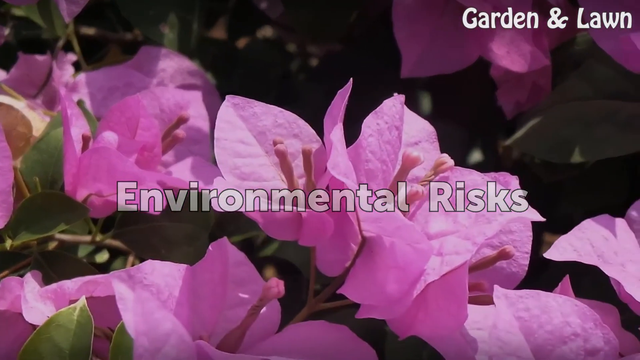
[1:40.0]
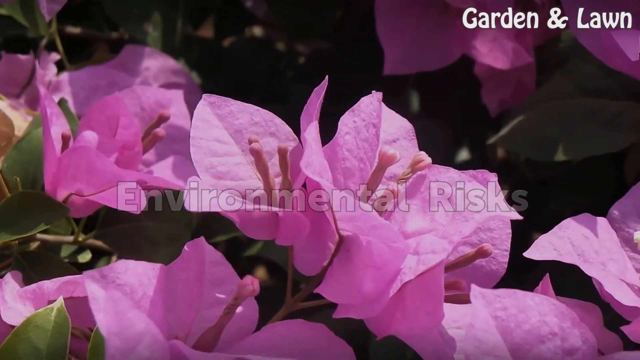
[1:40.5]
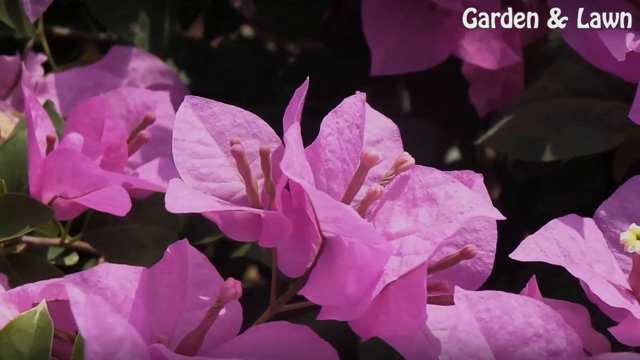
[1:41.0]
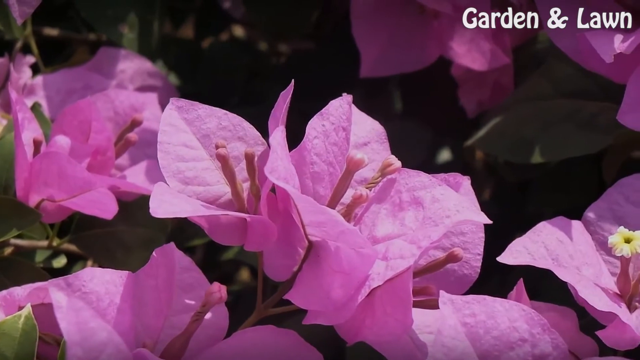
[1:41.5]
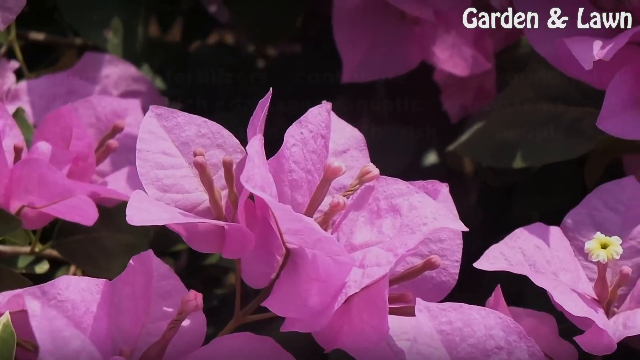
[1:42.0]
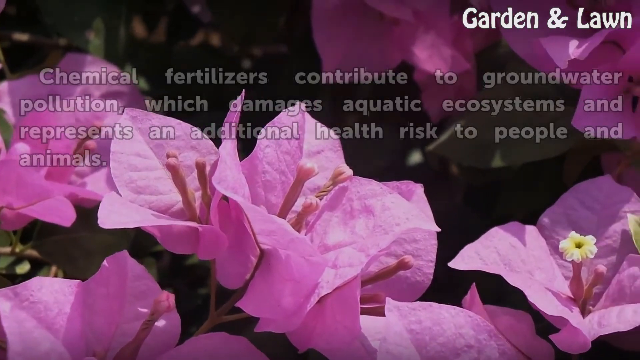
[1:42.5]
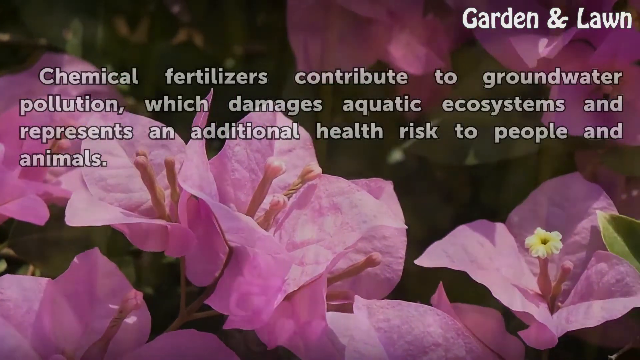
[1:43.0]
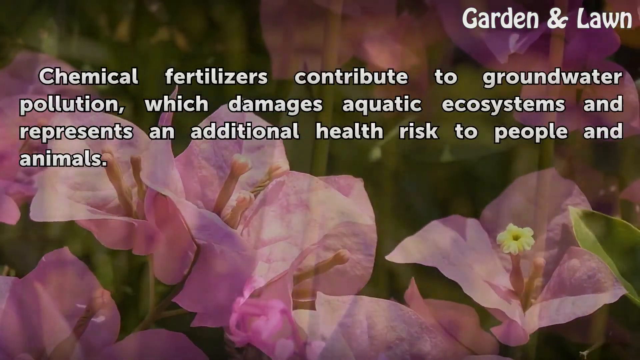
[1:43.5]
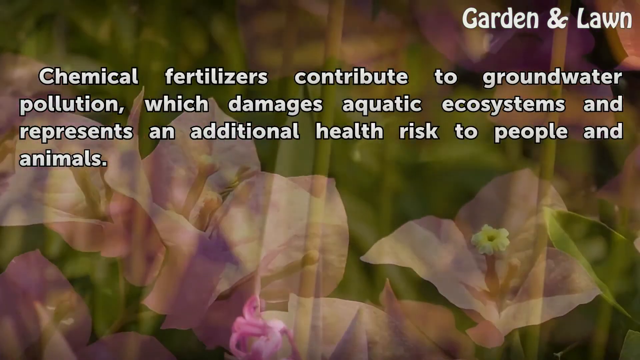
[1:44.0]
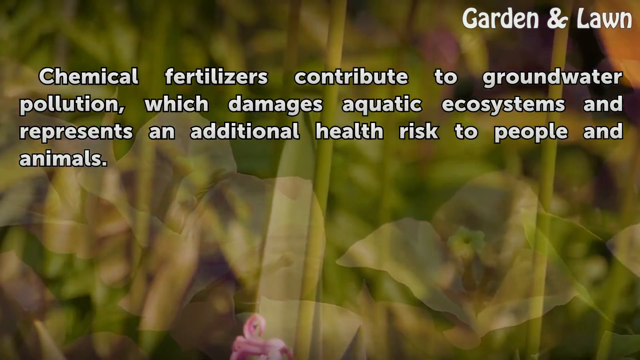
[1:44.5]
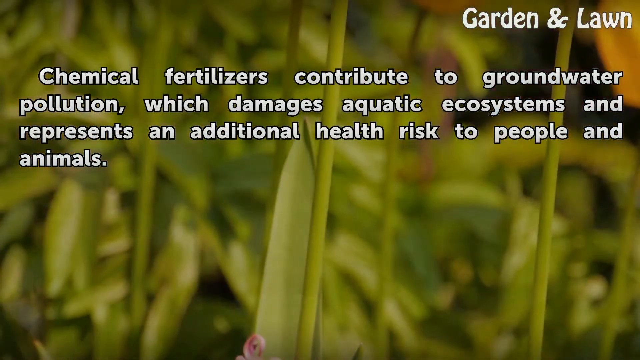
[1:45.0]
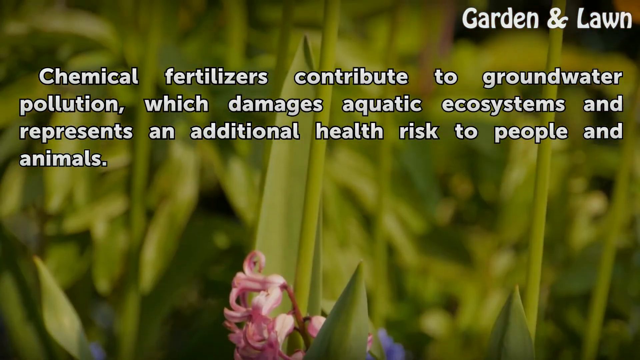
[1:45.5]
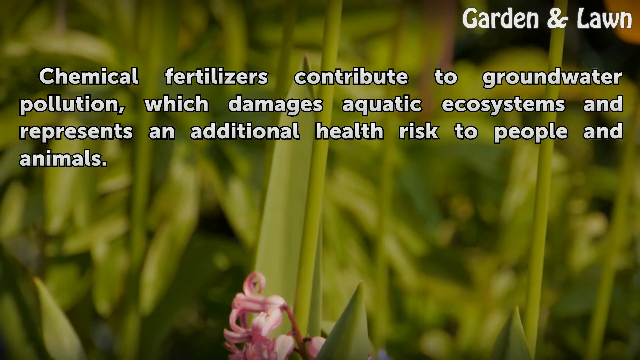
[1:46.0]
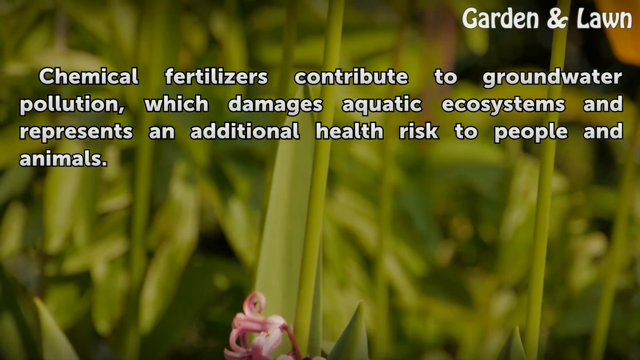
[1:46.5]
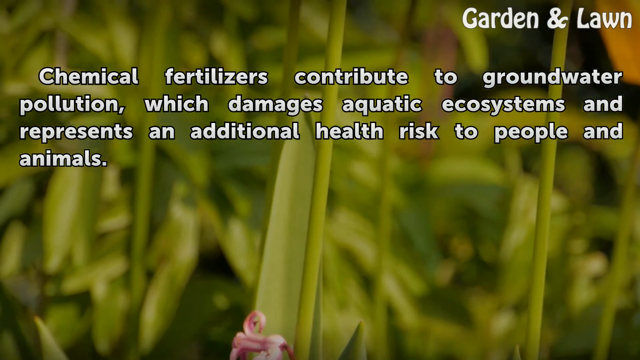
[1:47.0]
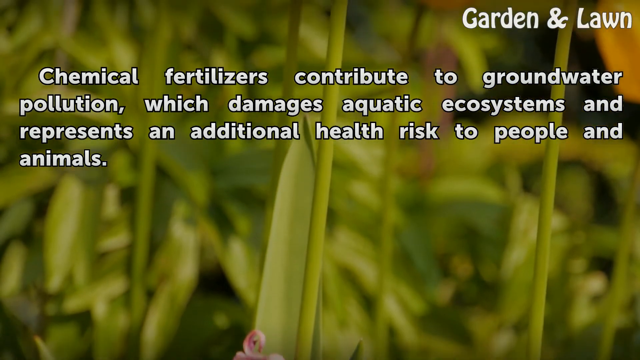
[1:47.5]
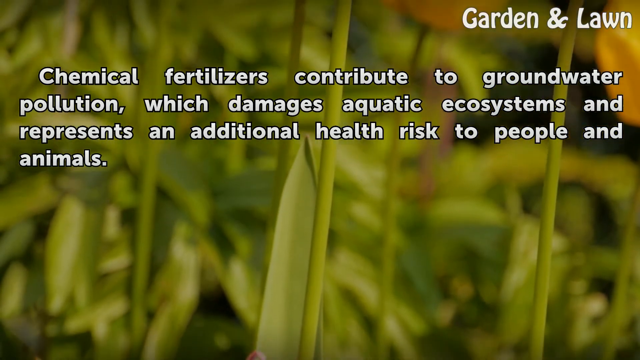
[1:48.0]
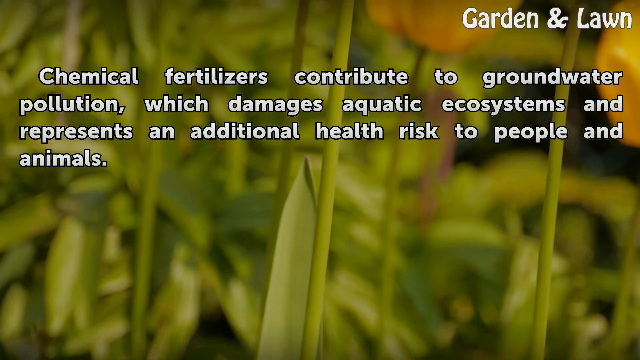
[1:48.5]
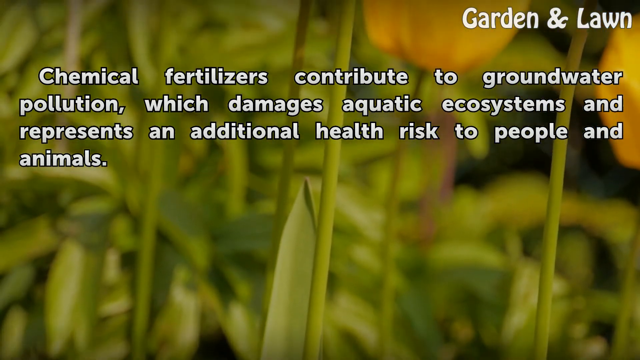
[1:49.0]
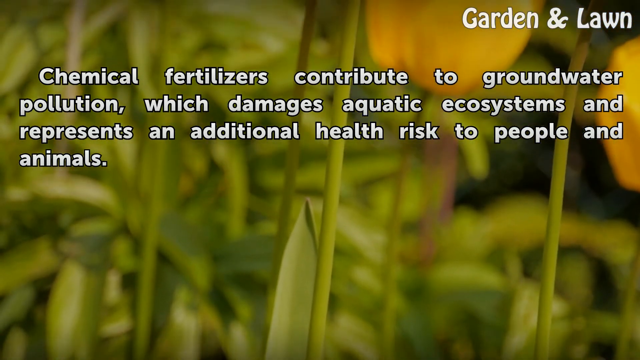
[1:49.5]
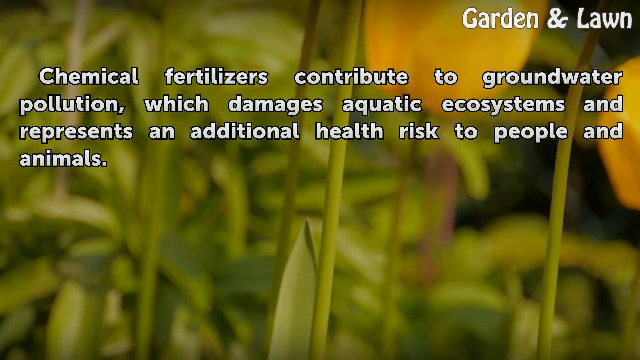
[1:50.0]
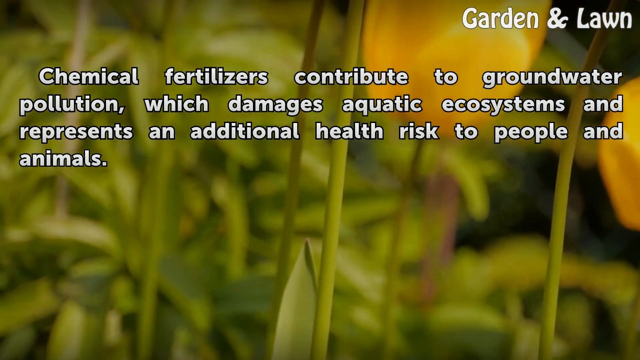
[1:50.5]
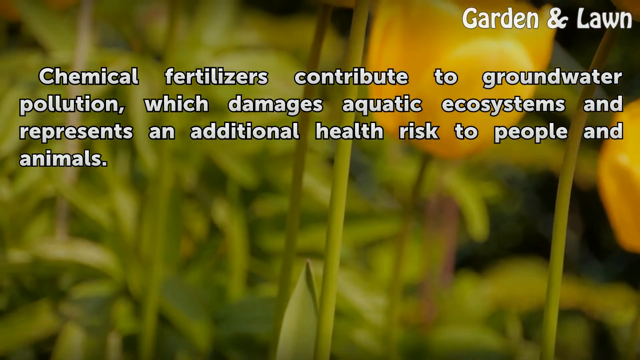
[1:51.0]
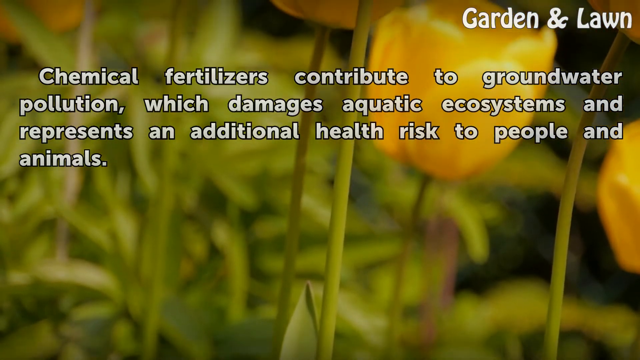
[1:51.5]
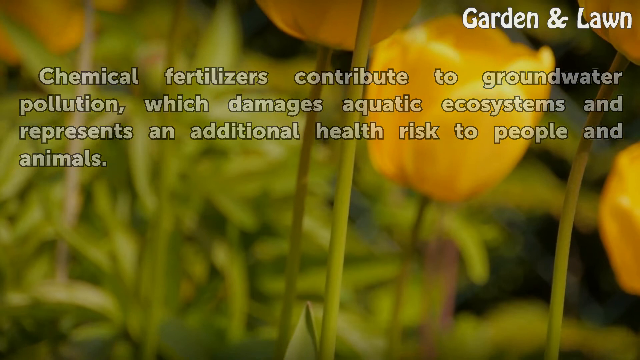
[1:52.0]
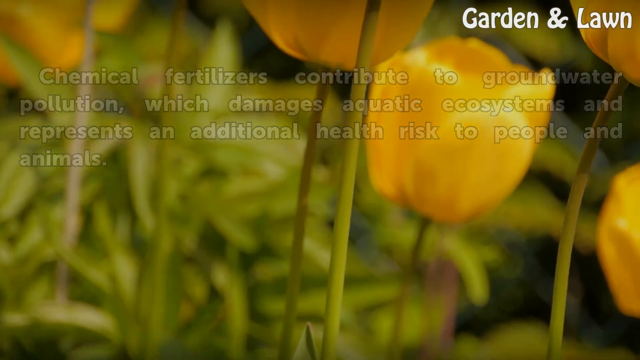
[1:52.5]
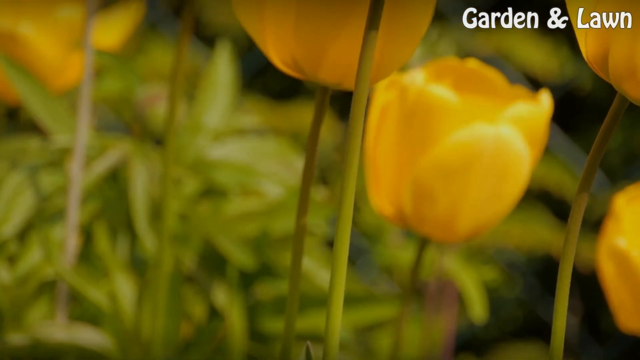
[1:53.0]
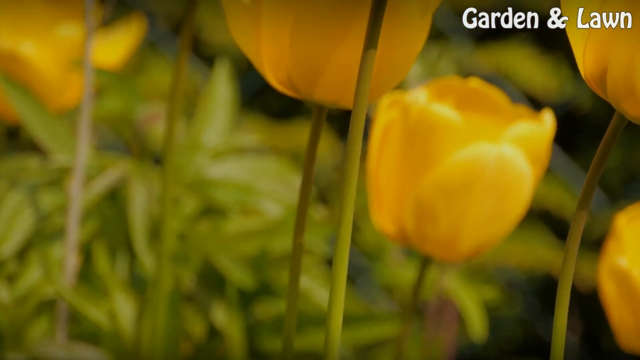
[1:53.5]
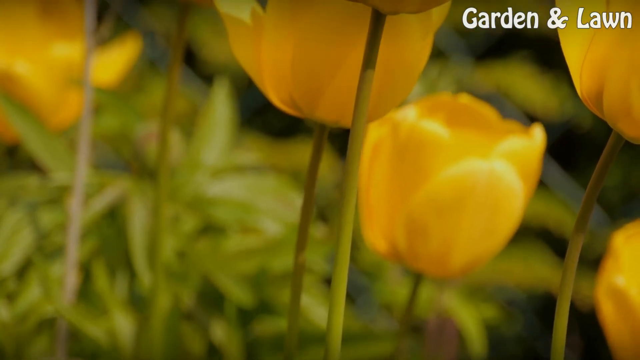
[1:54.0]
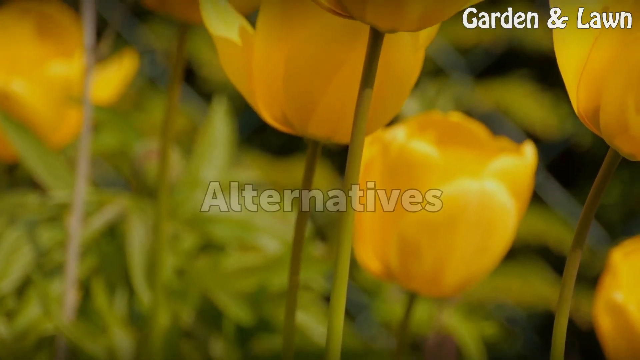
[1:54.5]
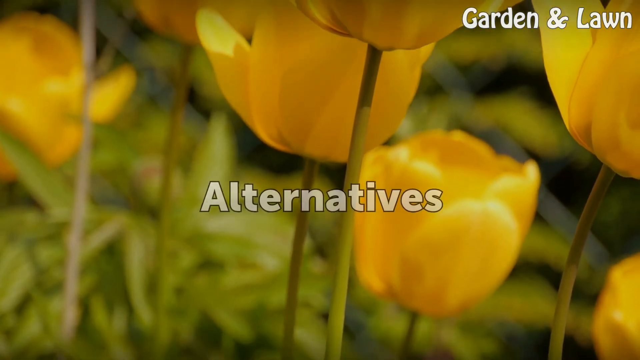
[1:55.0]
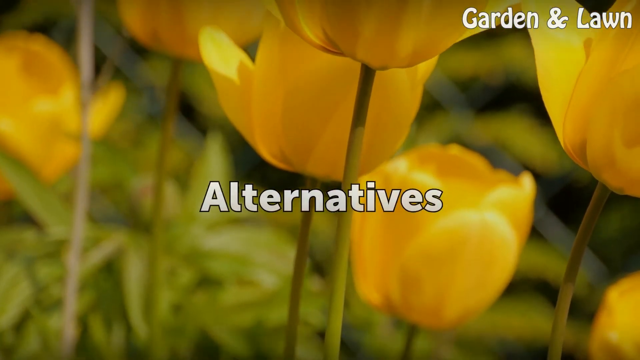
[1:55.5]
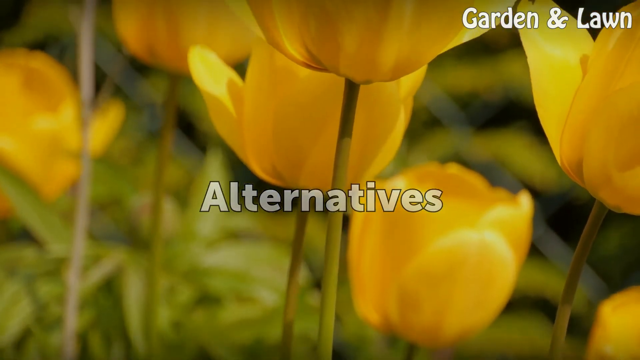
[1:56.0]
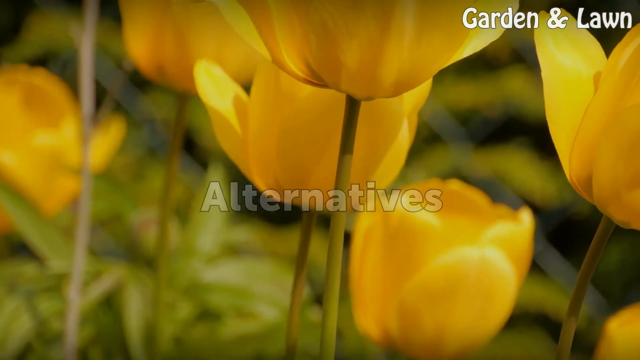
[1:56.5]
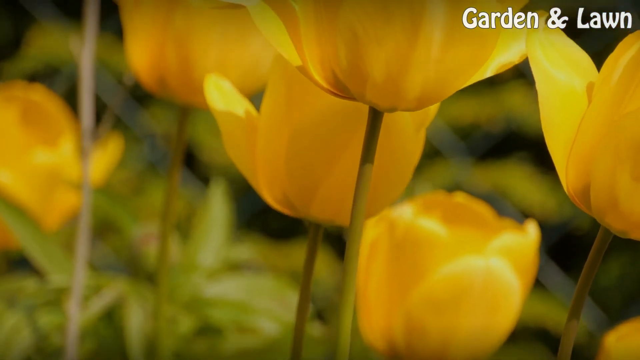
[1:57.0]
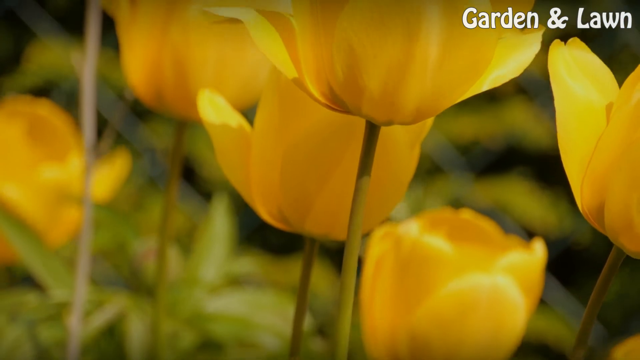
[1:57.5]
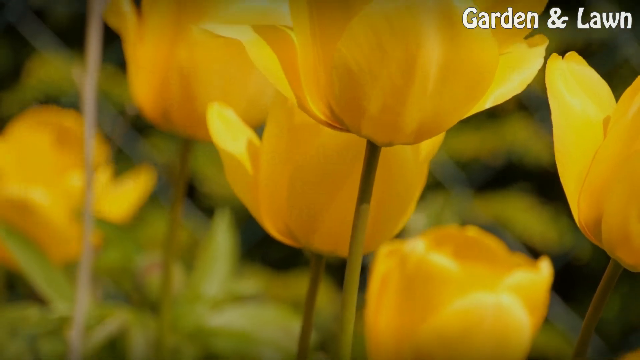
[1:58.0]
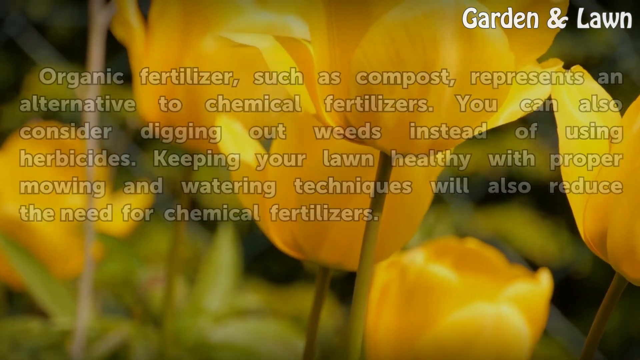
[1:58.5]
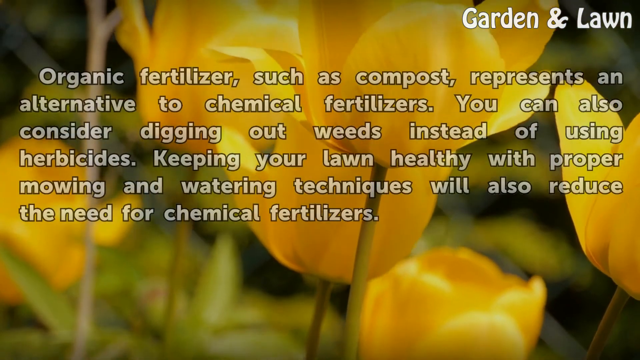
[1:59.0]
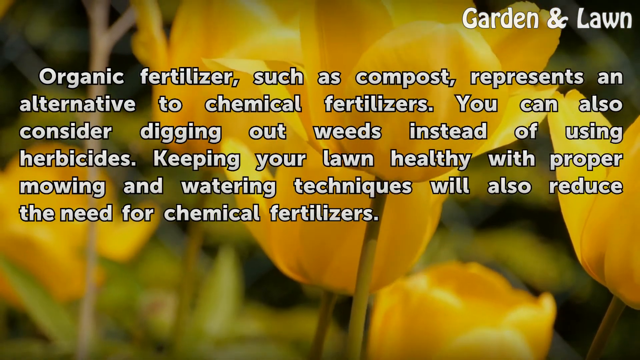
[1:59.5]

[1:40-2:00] Text appears reading "chemical fertilisers contribute to groundwater pollution which damages aquatic ecosystems and represents an additional health risk to people and animals." Green stems are in the background, and the camera pans slowly upwards, revealing yellow flowers at the top. Text reading "alternatives" appears in the centre. The camera continues to pan up, showing about five or six yellow flowers. More text appears, saying fertilisers "such as compost represents an alternative to chemical fertilisers. You can also consider digging out weeds instead of using herbicides. Keeping your lawn healthy with proper mowing and watering techniques will also reduce the need for chemical fertilisers."